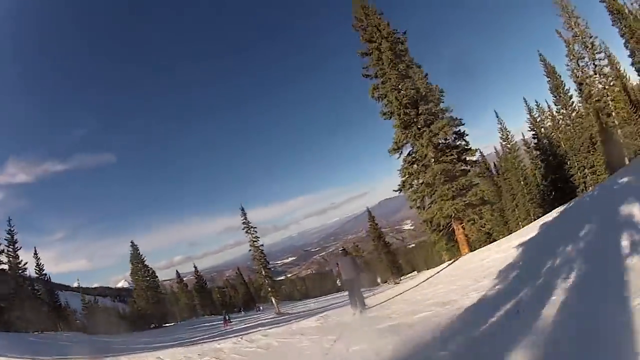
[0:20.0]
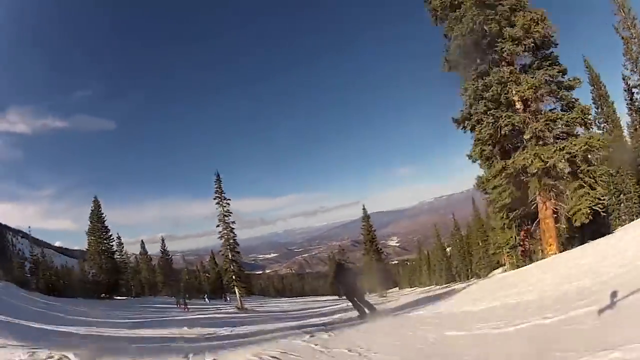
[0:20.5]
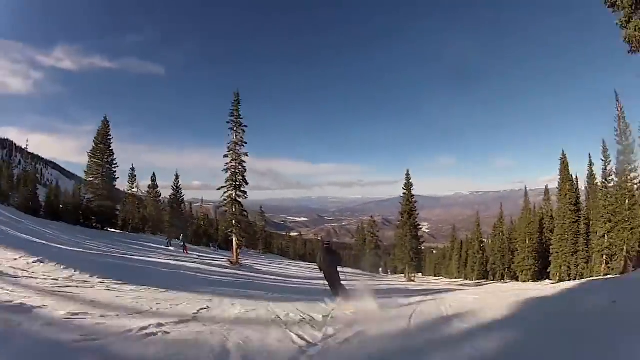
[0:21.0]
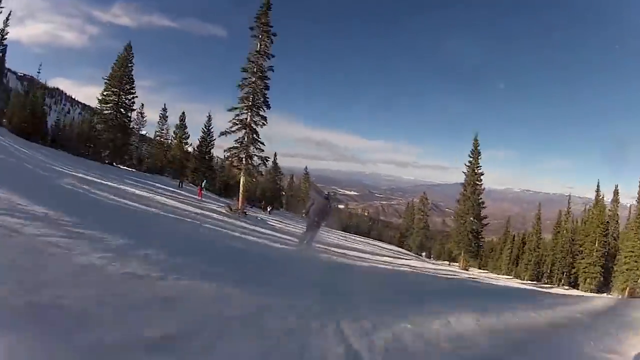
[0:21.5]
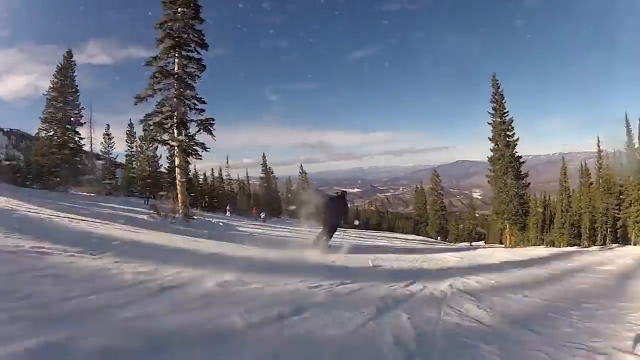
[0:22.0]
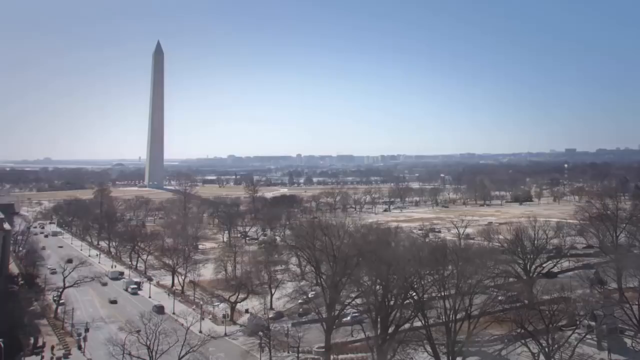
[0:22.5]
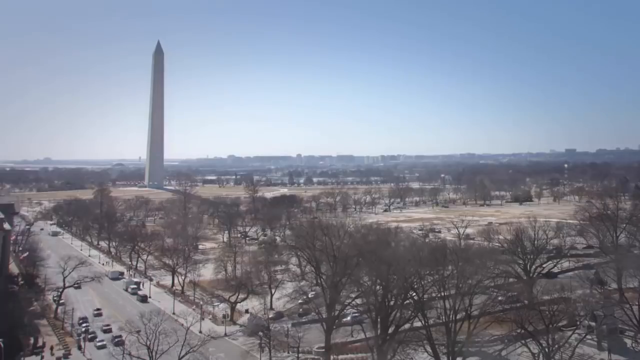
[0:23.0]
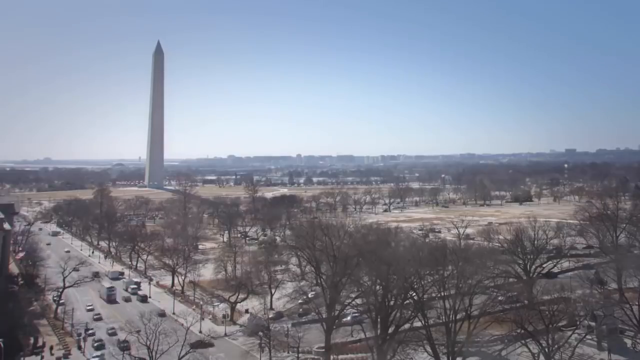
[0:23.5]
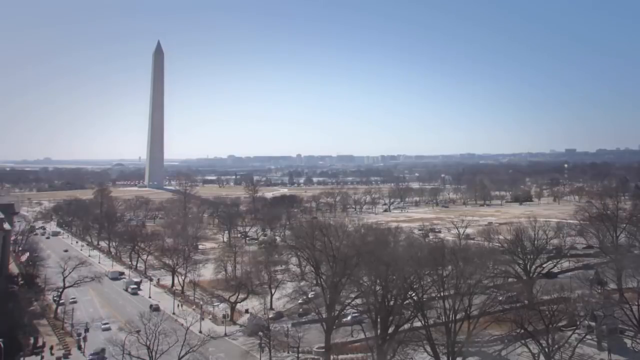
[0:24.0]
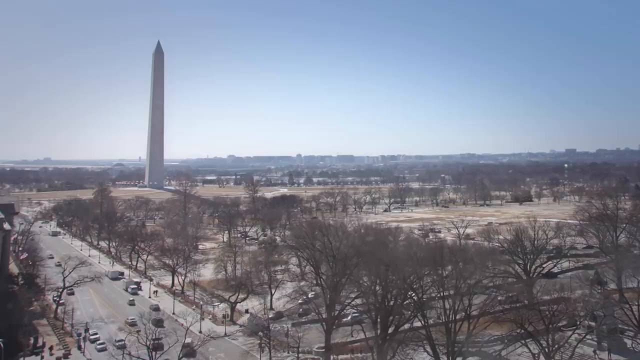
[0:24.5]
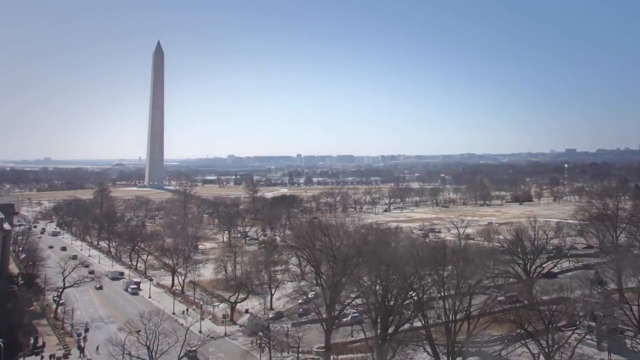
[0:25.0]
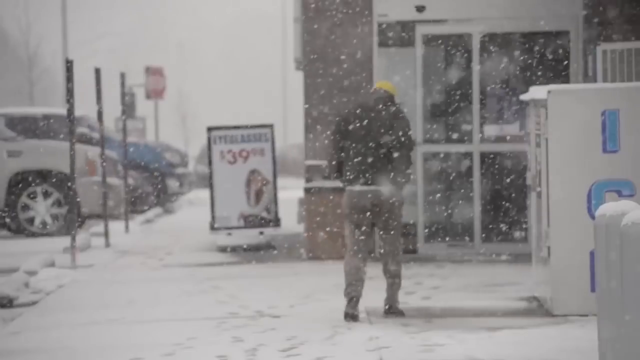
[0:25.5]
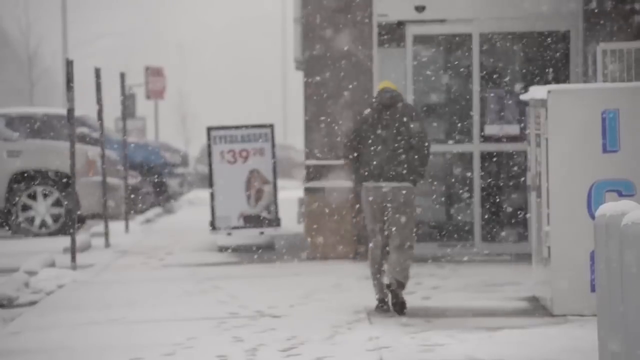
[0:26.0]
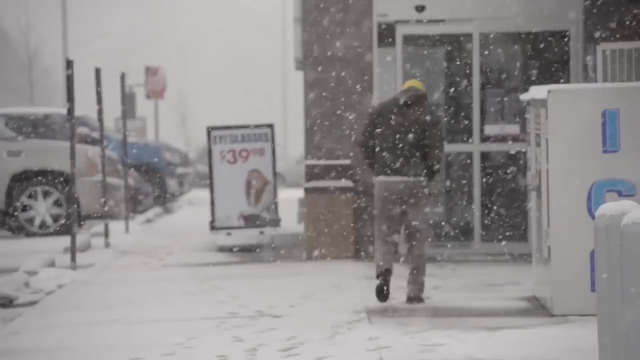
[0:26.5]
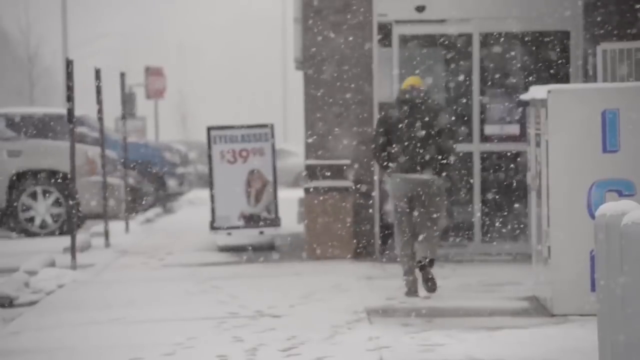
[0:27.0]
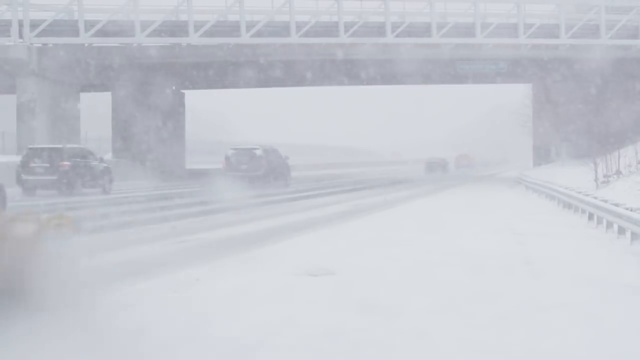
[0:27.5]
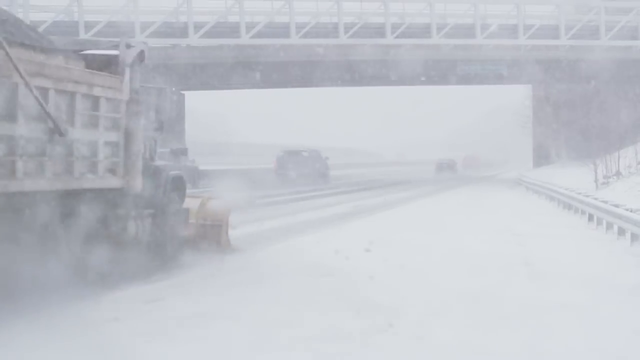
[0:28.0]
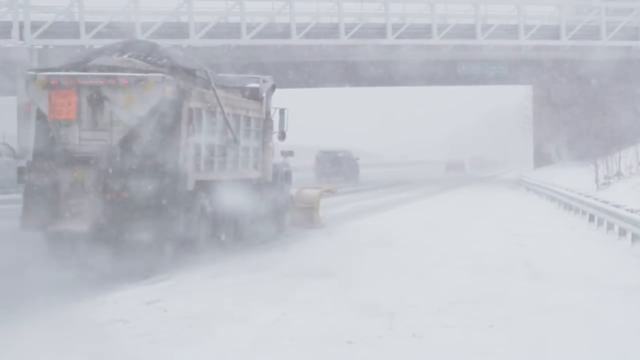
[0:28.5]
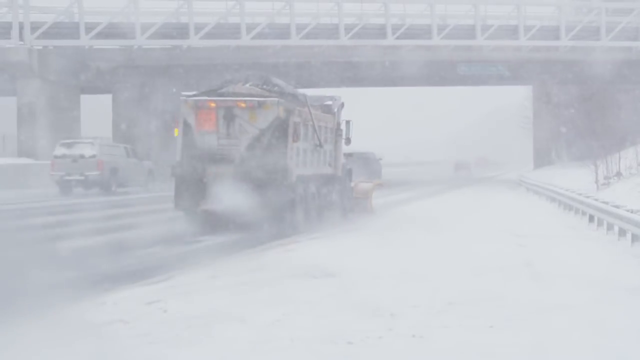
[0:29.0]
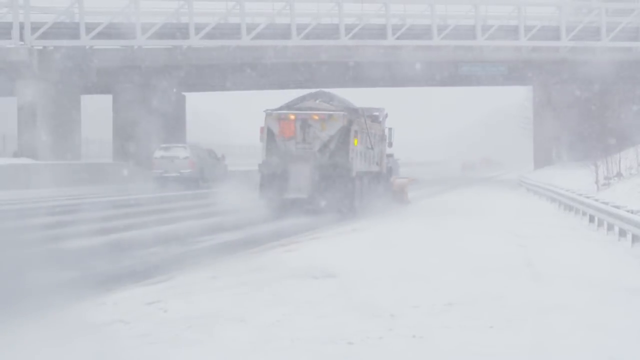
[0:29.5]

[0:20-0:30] A skier goes down an alpine mountain with lots of evergreen trees all around, and the camera follows him downhill. A shot of Washington D.C. covered in snowfall during winter follows. A man walks to a store in the middle of a blizzard; he is very cold and has his hands in his pocket. Traffic on a highway is then shown, including a truck with a load of coal in the back.